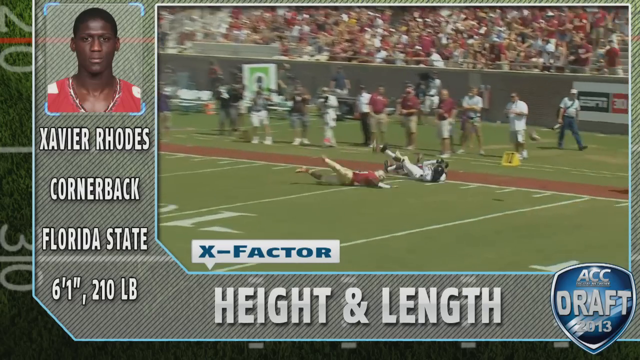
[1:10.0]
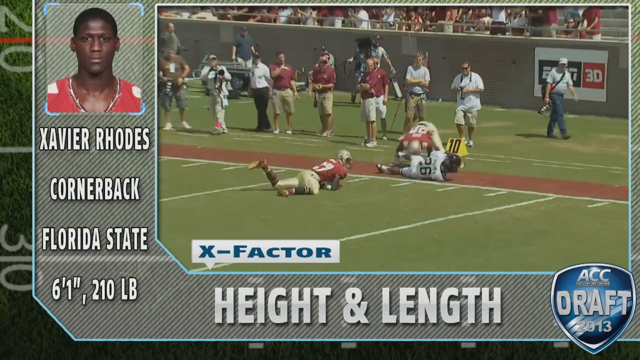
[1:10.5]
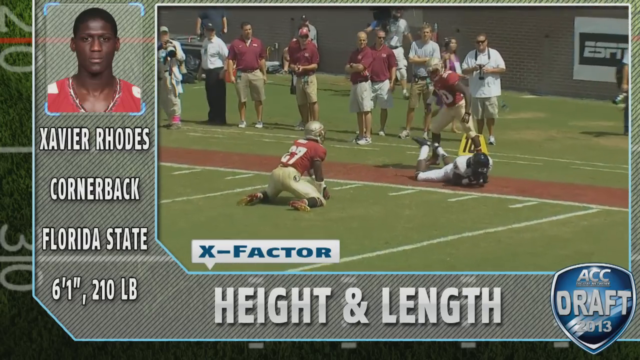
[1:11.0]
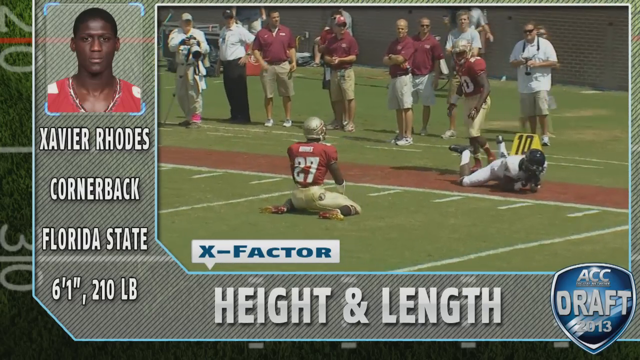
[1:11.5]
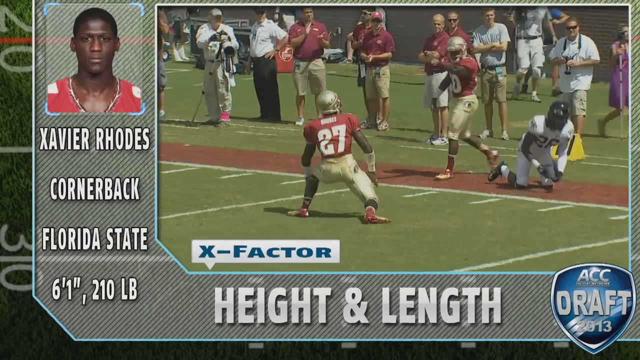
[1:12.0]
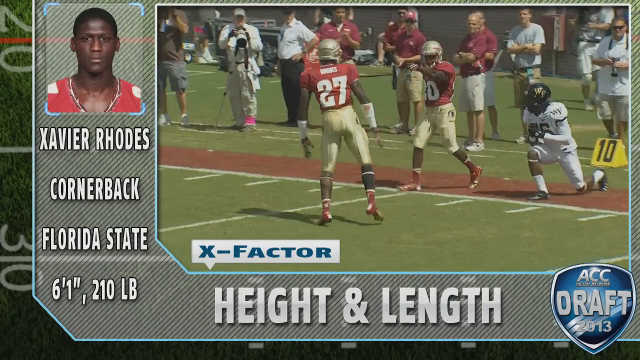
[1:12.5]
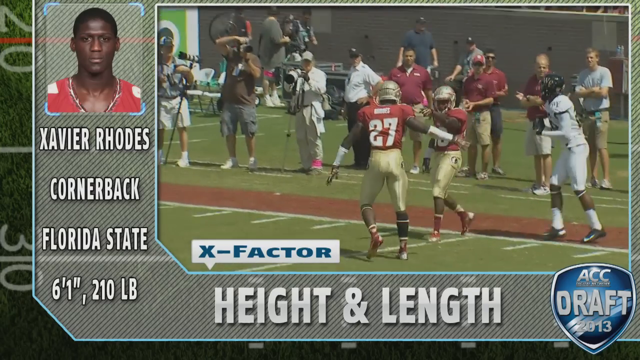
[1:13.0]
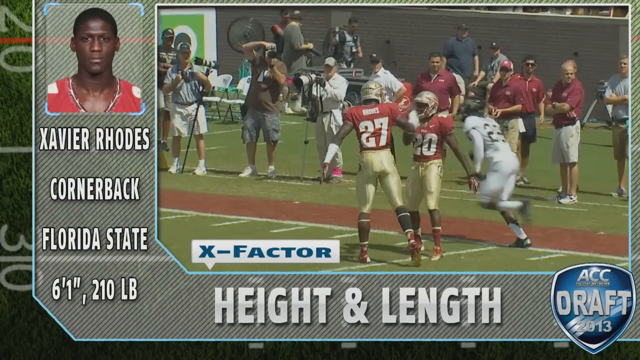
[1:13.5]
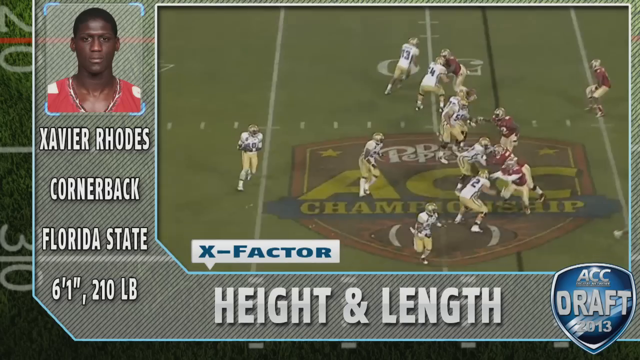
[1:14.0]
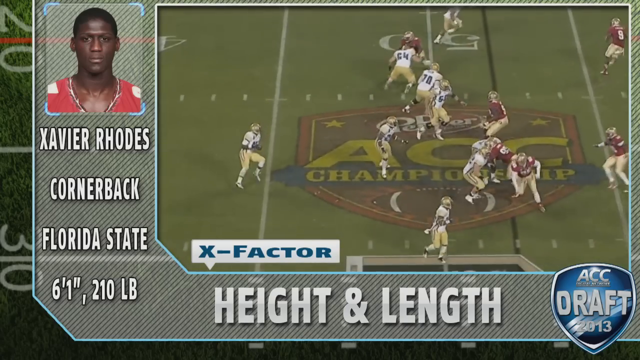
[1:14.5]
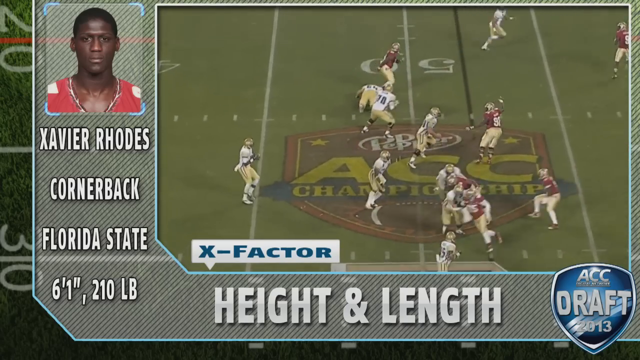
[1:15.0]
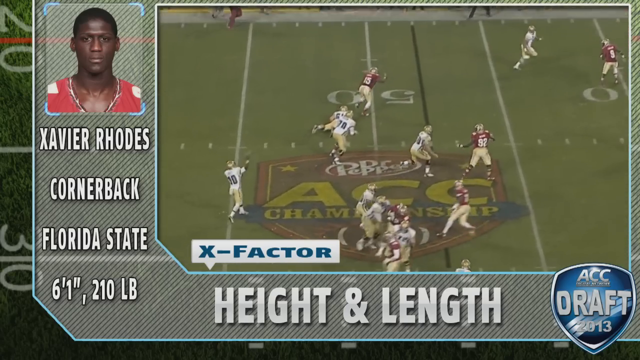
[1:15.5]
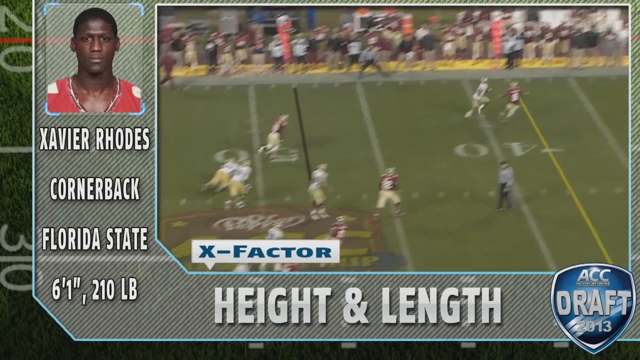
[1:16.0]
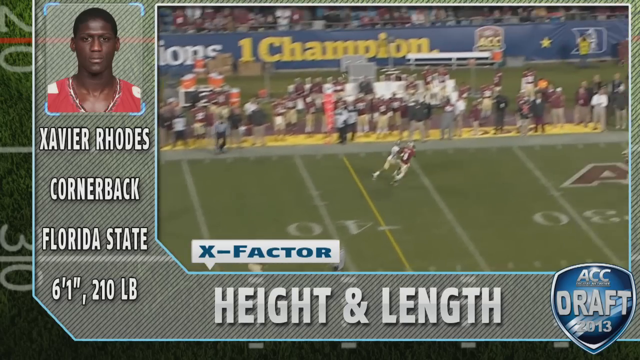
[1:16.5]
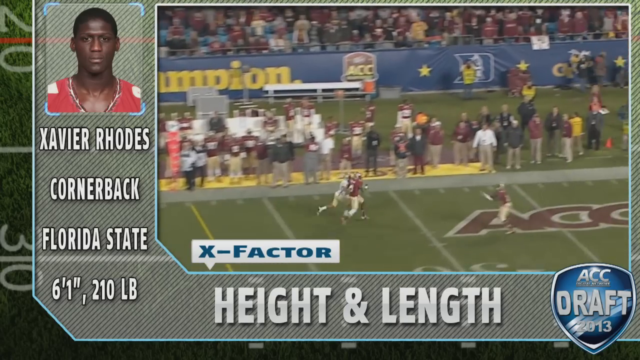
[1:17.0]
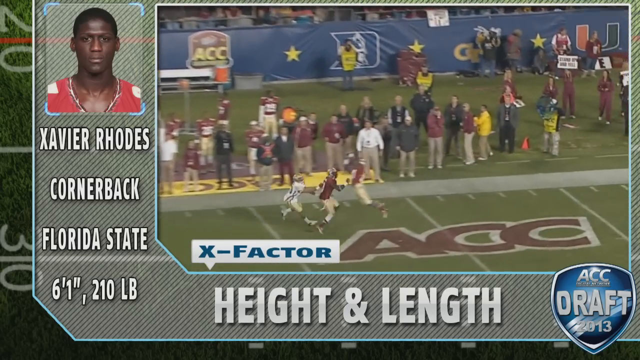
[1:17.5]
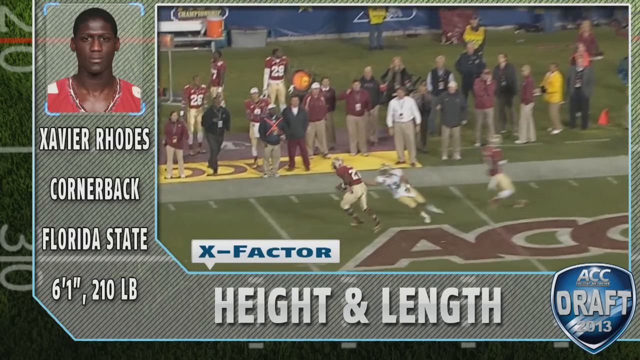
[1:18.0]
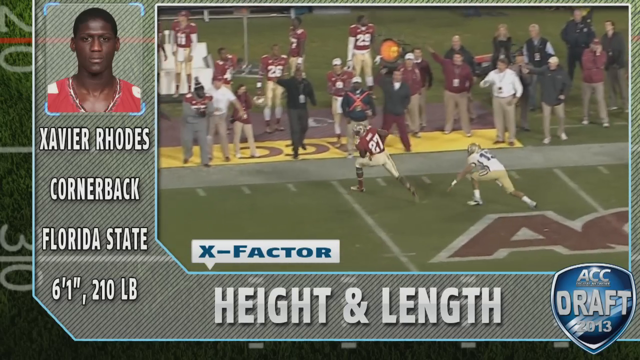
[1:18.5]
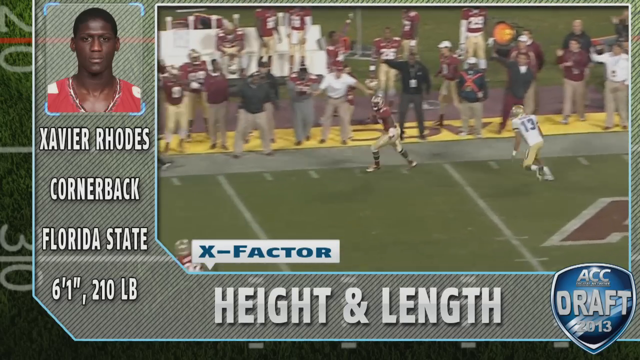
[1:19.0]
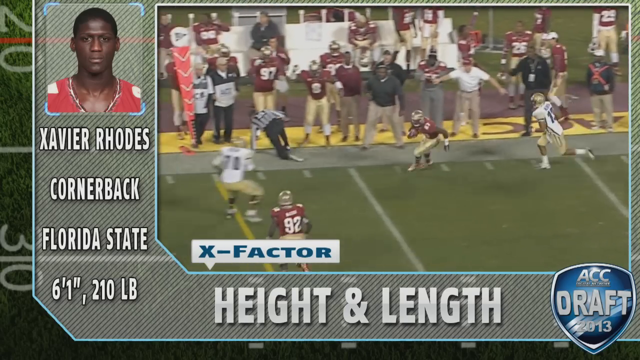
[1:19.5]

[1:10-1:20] A purple and gold player seems to have control of the ball and seems to be rejoicing with a teammate. People at the back, also team members, cheer for them and show support. The crowd of the winning team is cheerful, energetic and lively, while around the other team, the white and blue team, there seems to be a lack of energy.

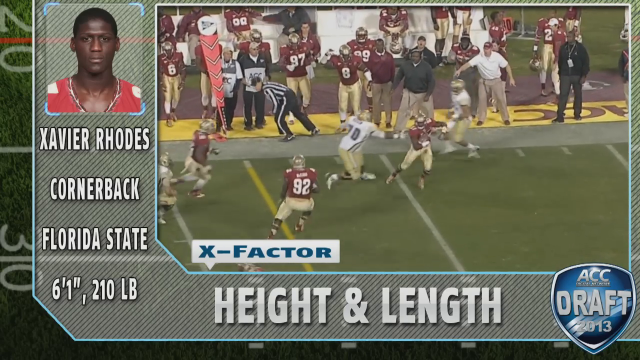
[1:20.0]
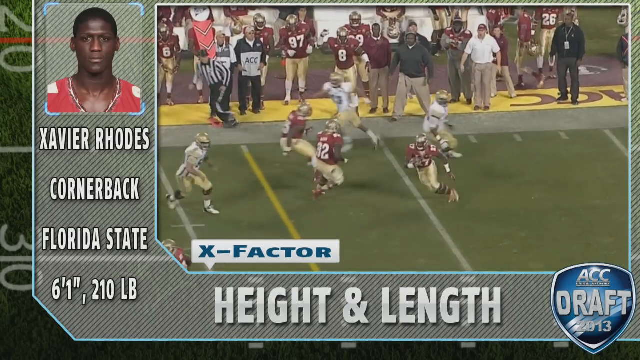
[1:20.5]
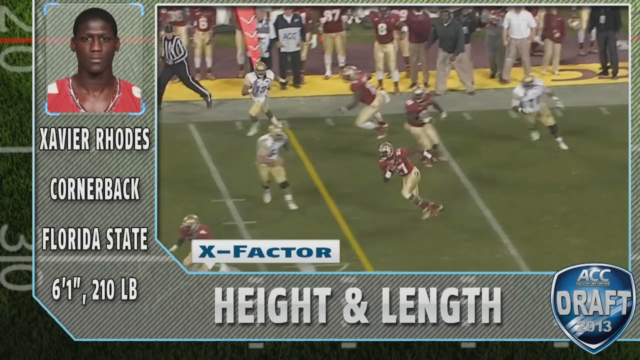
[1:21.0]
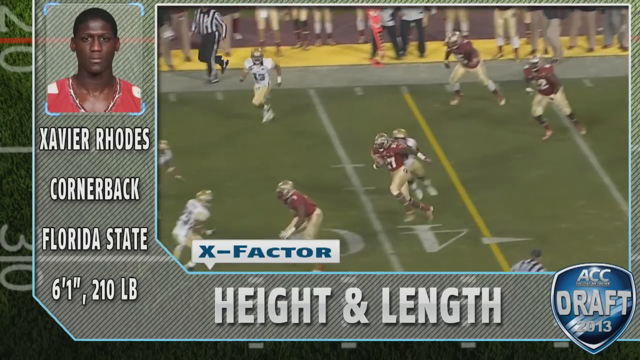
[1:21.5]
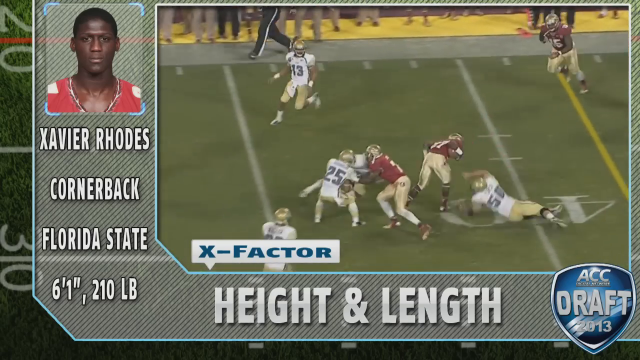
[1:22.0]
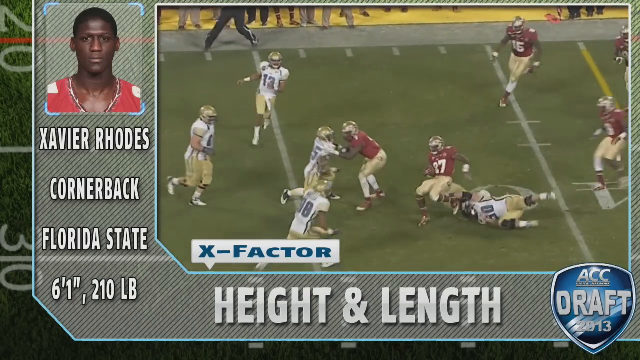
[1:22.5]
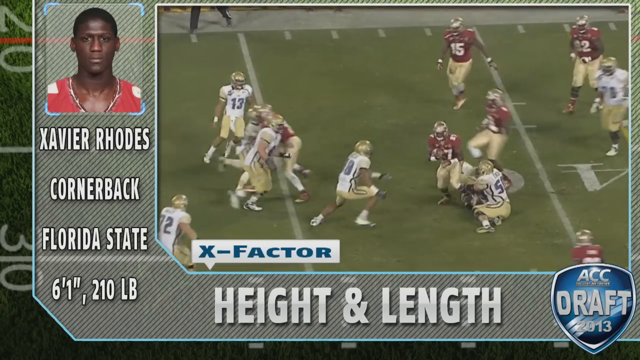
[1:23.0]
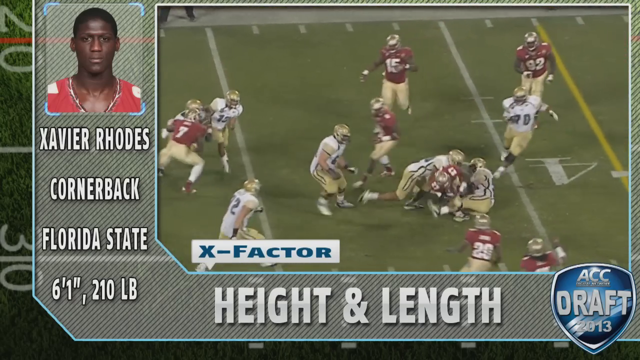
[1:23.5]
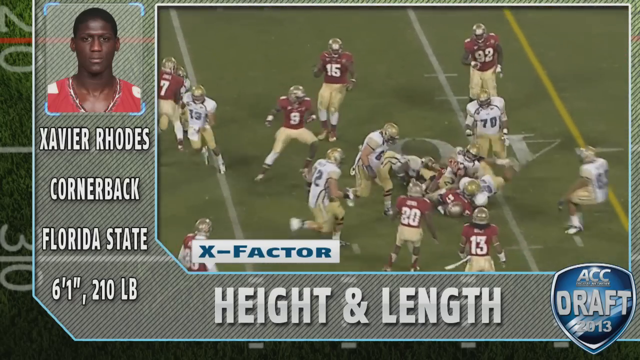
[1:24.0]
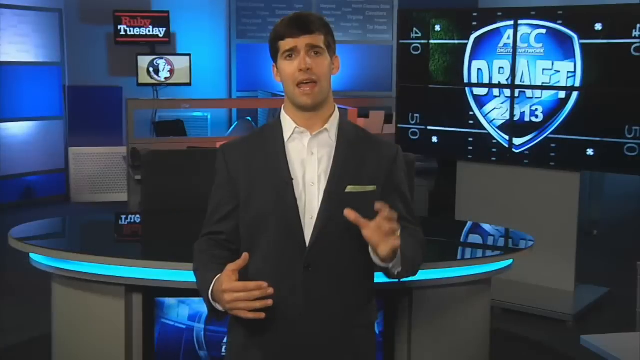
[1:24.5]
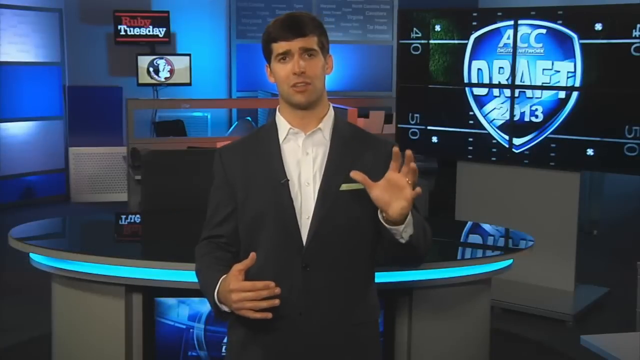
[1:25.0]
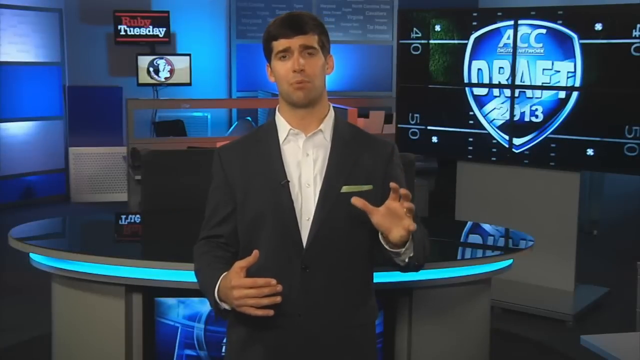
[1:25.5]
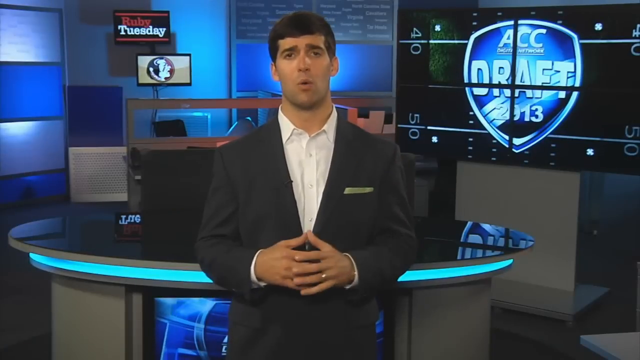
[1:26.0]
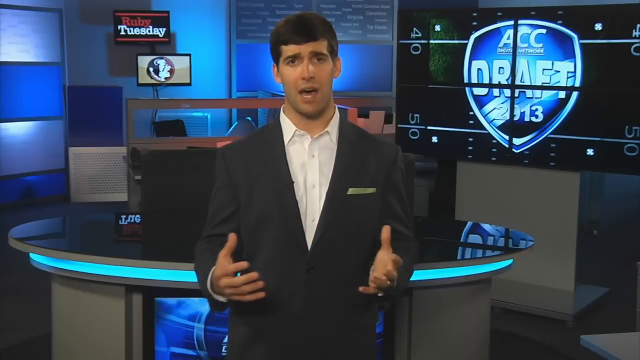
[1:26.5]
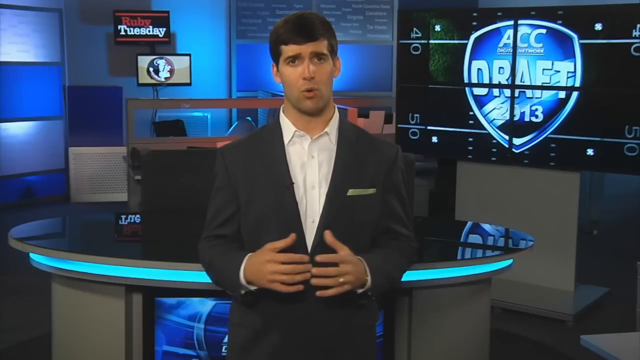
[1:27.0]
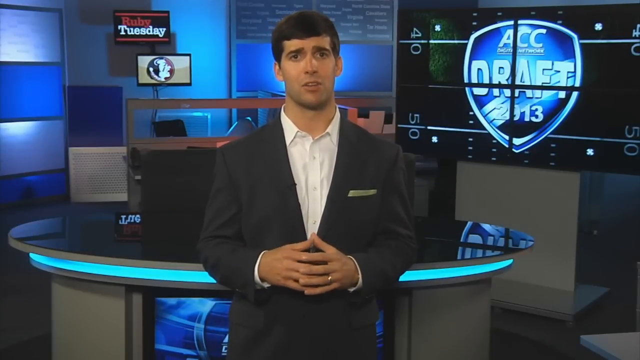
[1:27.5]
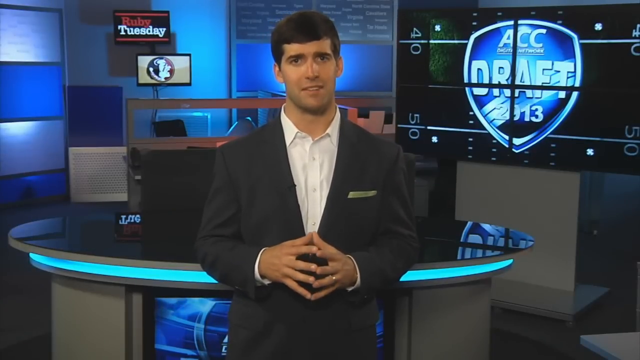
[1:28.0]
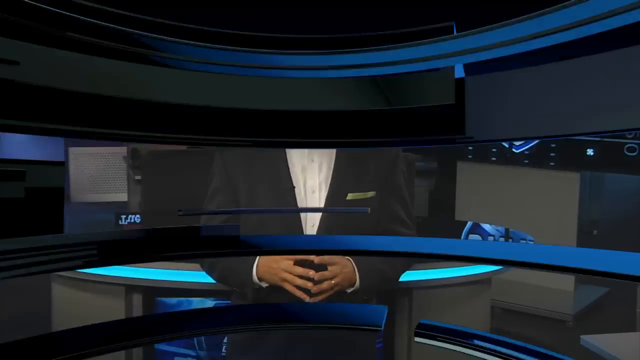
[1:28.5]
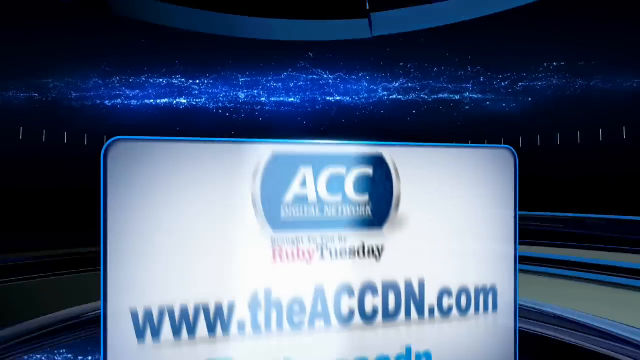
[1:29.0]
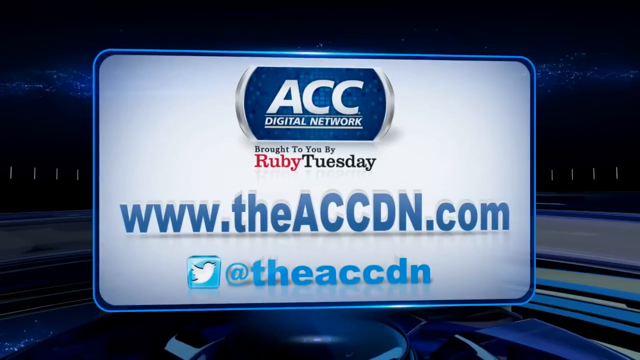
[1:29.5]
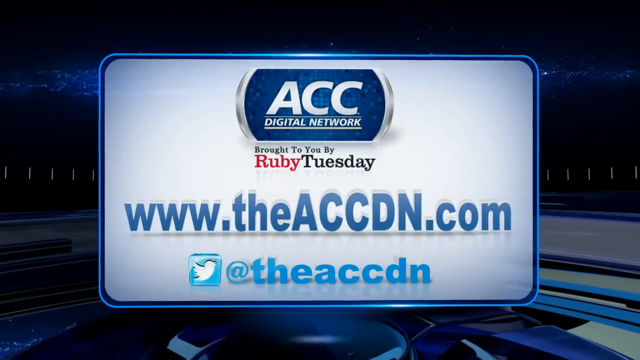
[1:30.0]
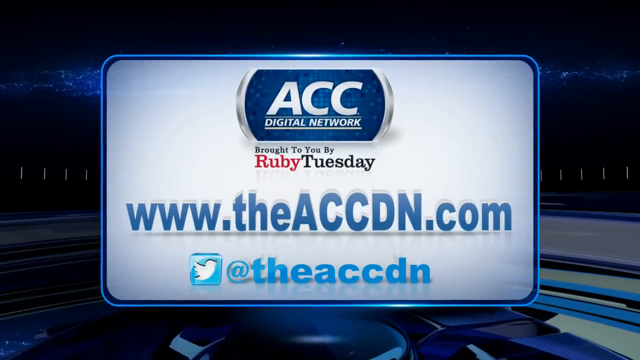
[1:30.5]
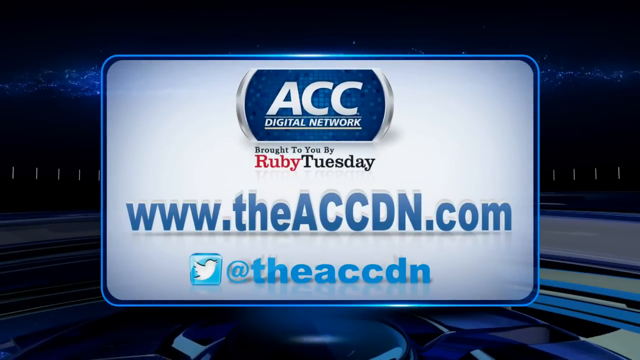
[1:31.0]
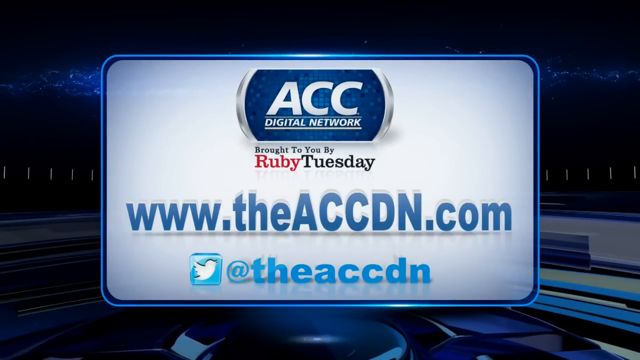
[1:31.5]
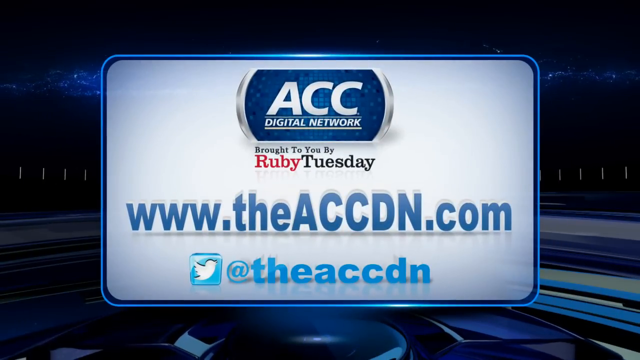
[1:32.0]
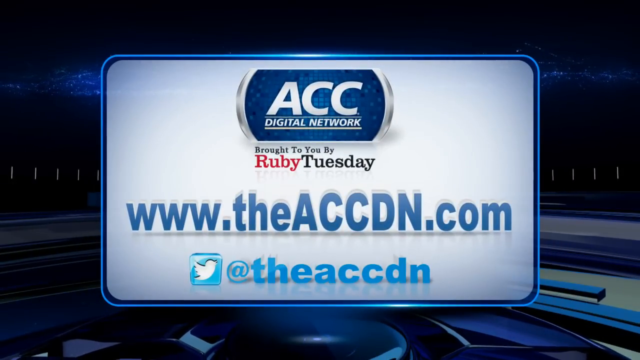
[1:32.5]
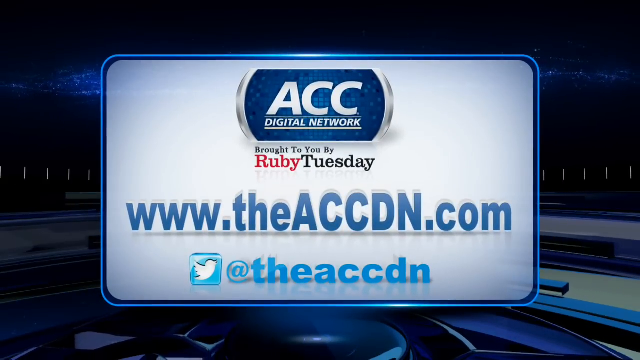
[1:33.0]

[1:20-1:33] There seems to be lots of movement and quarreling among the team members. The video ends with the broadcaster filming themselves.